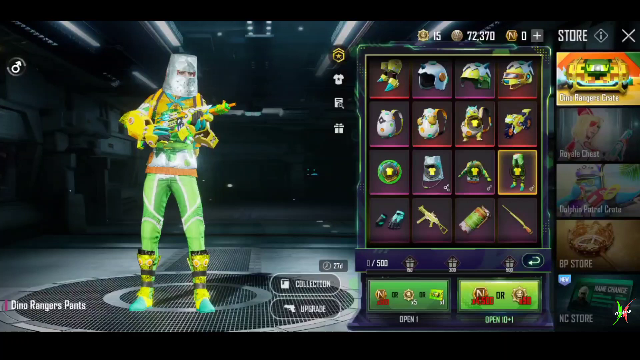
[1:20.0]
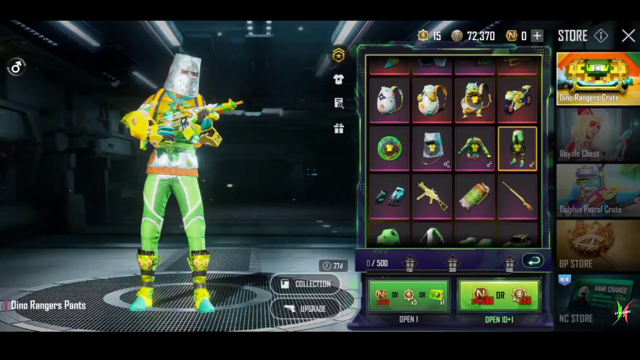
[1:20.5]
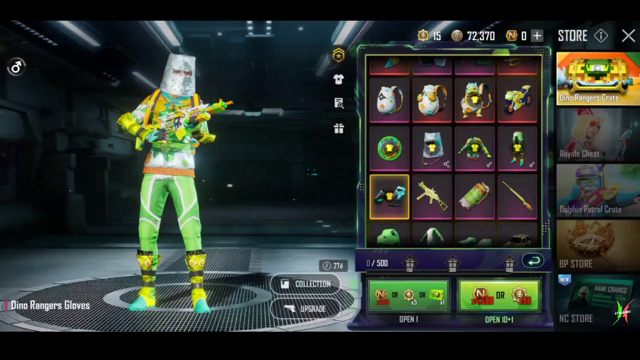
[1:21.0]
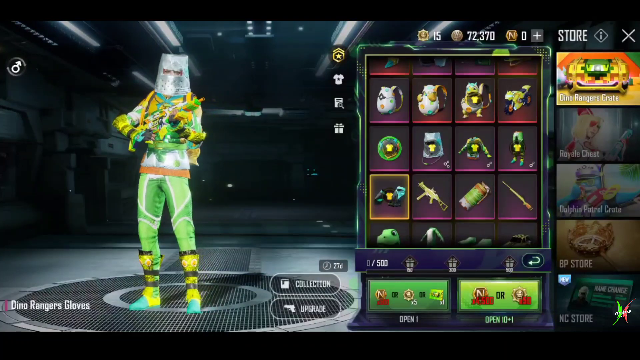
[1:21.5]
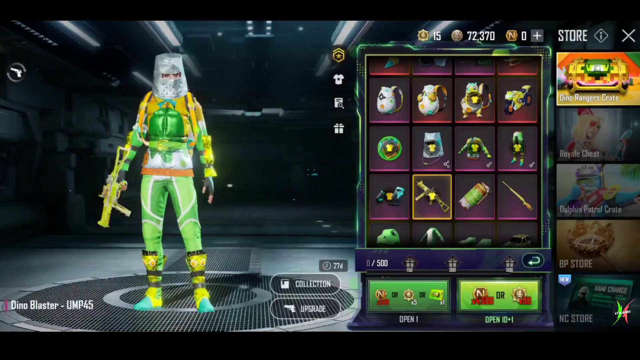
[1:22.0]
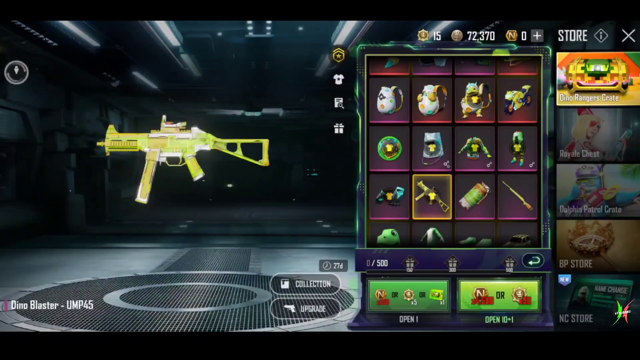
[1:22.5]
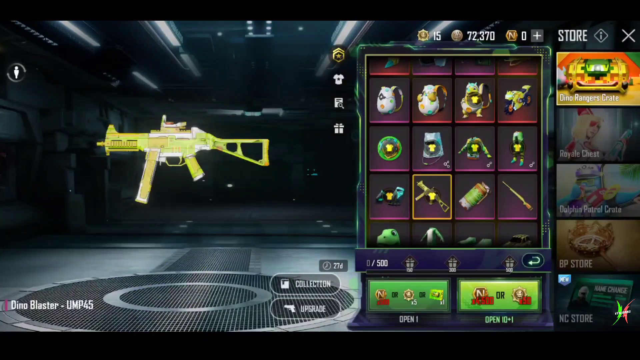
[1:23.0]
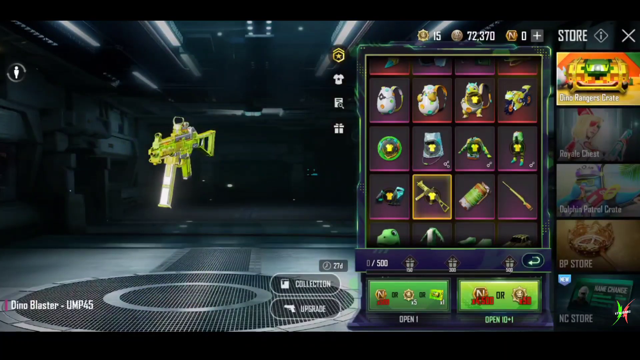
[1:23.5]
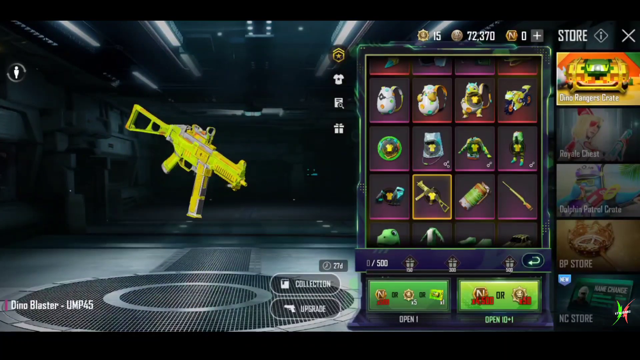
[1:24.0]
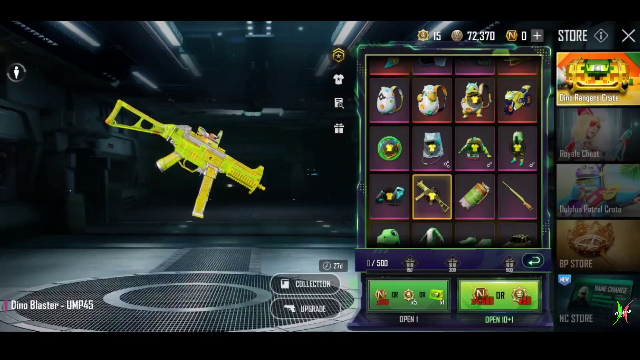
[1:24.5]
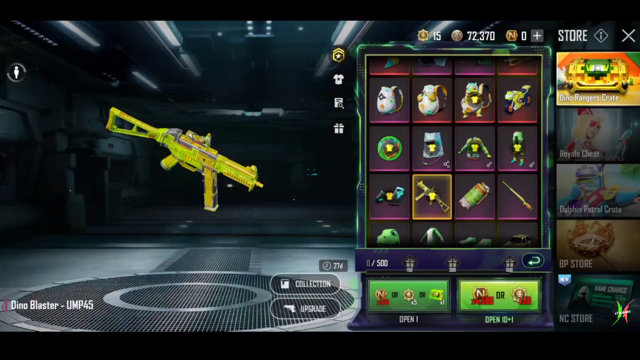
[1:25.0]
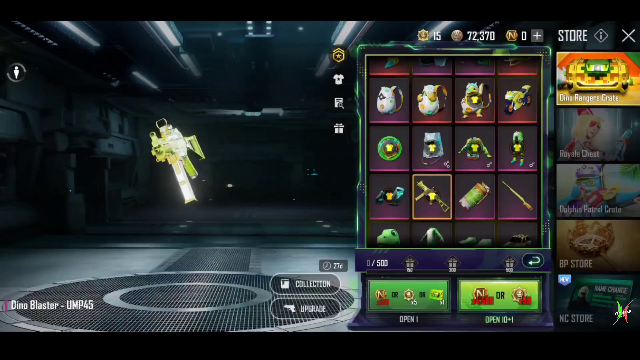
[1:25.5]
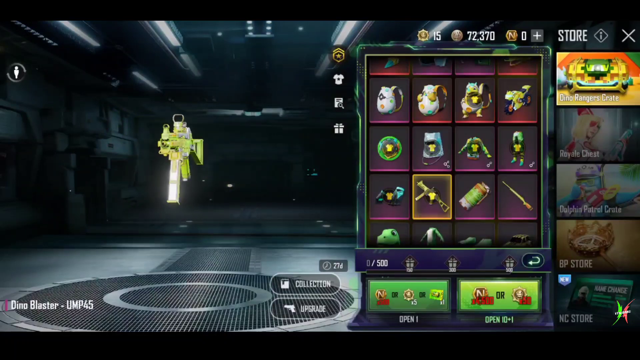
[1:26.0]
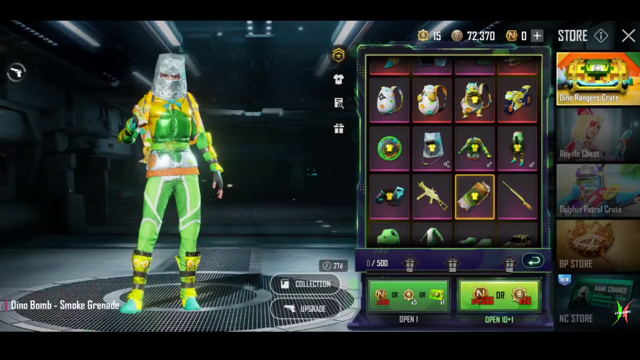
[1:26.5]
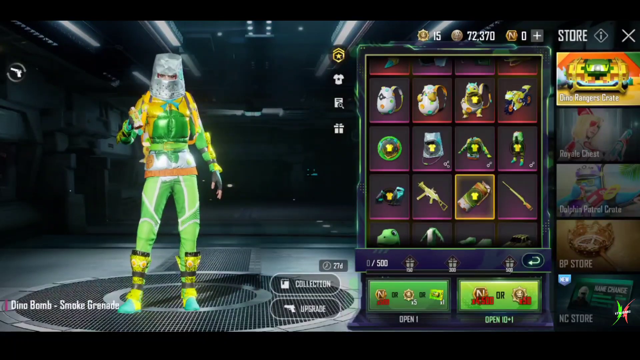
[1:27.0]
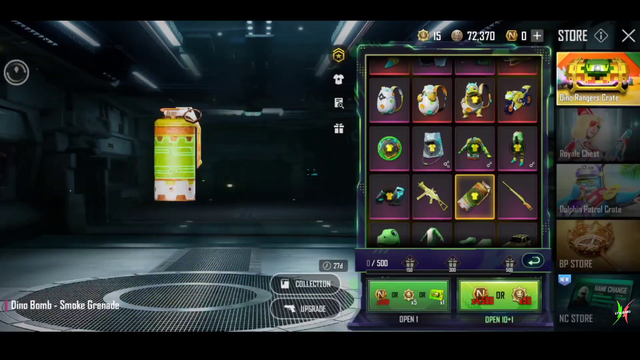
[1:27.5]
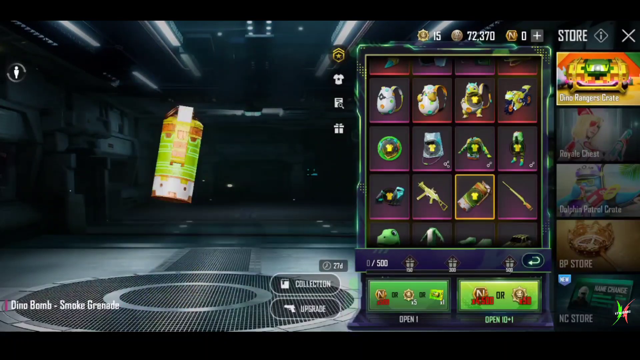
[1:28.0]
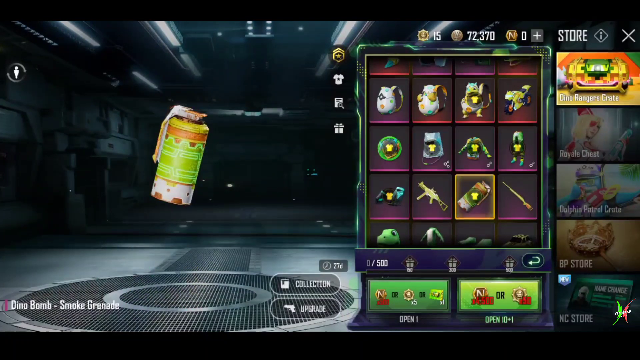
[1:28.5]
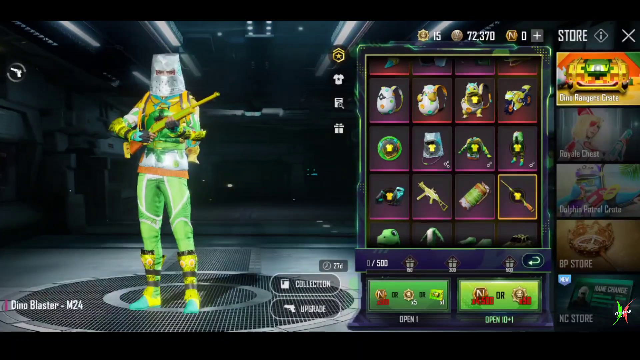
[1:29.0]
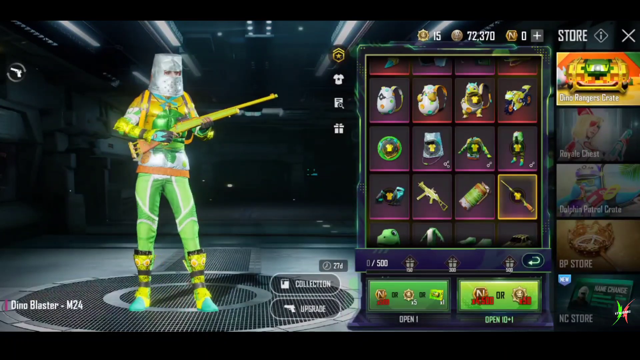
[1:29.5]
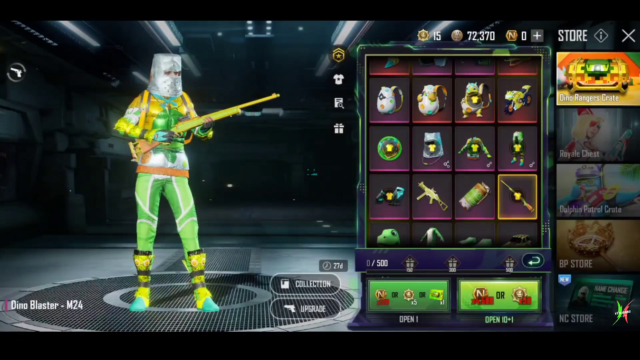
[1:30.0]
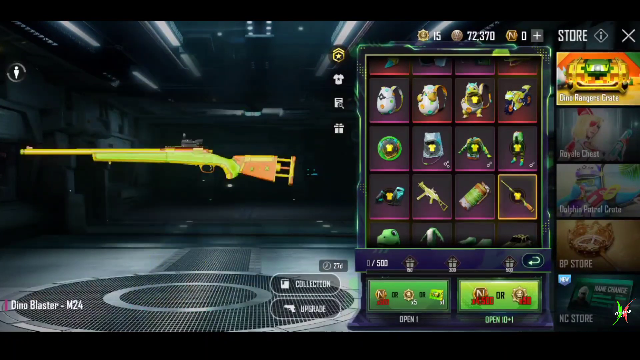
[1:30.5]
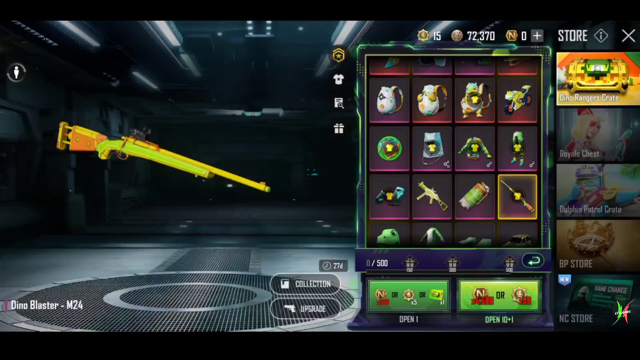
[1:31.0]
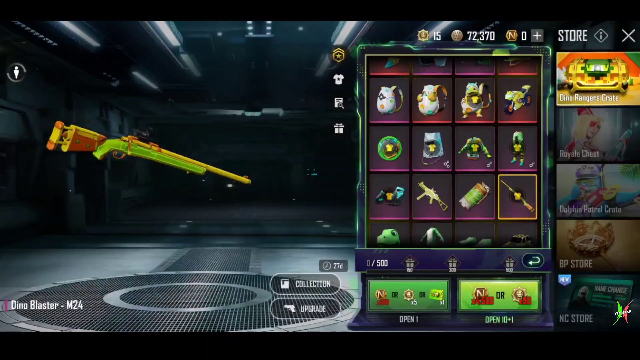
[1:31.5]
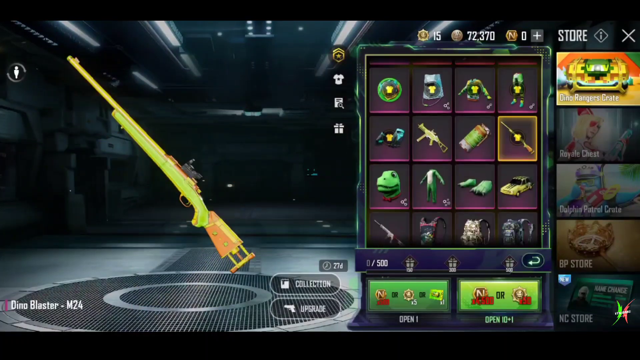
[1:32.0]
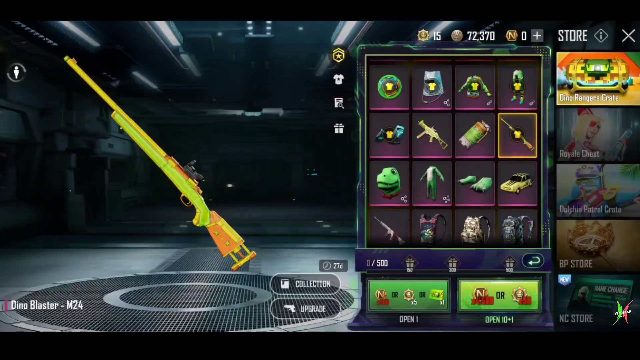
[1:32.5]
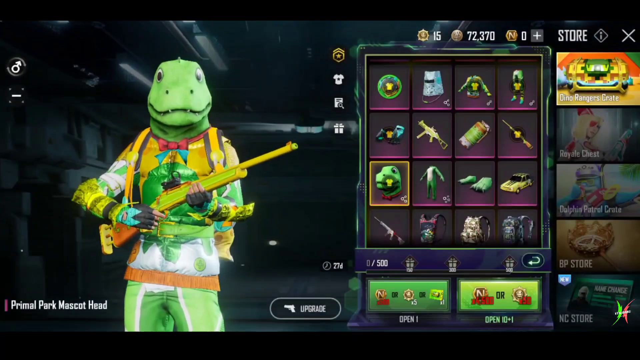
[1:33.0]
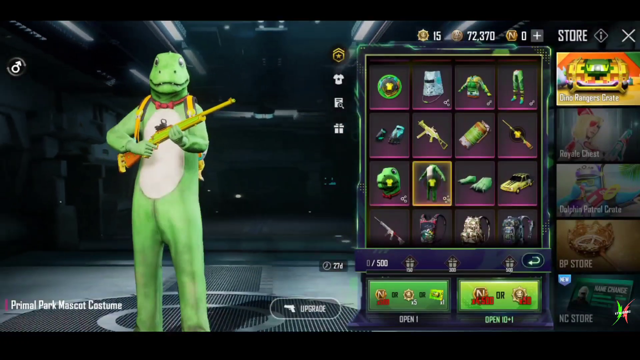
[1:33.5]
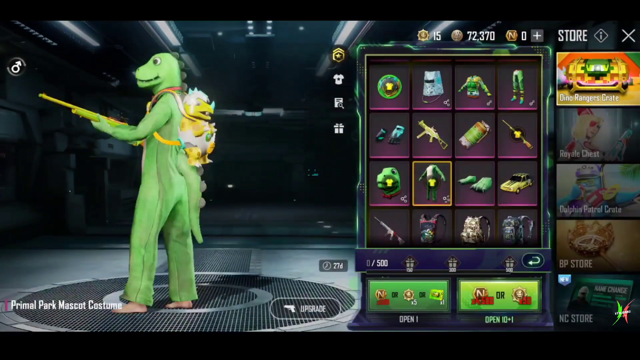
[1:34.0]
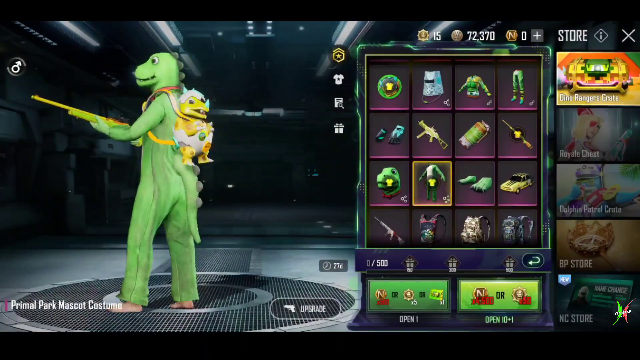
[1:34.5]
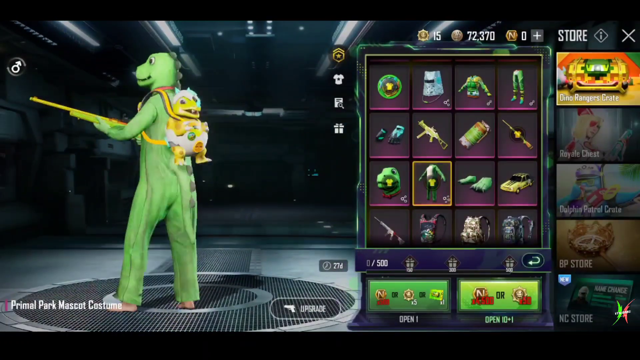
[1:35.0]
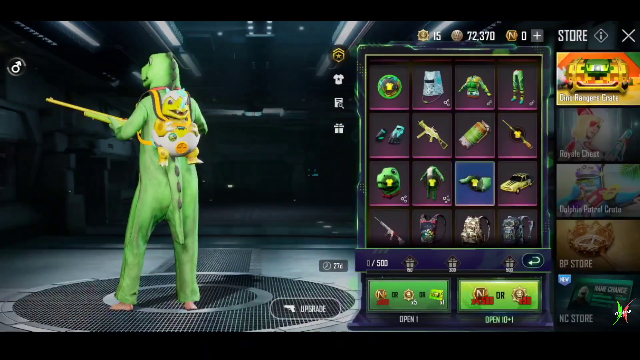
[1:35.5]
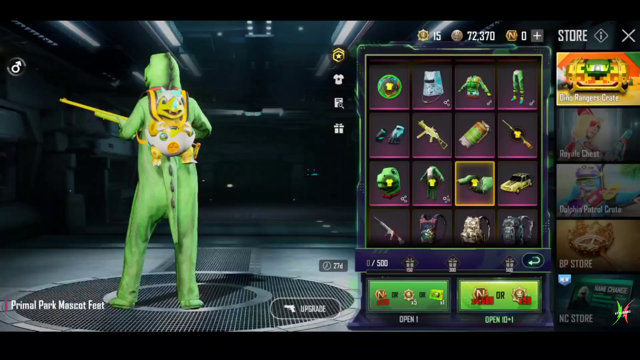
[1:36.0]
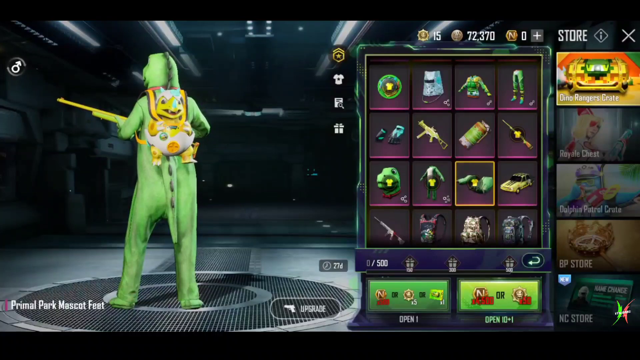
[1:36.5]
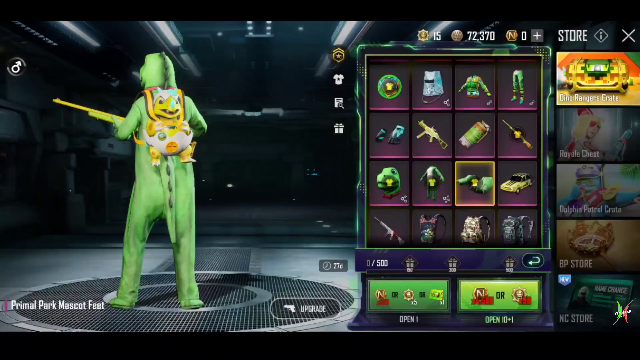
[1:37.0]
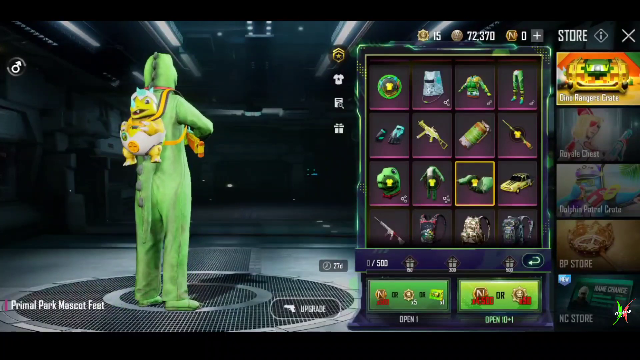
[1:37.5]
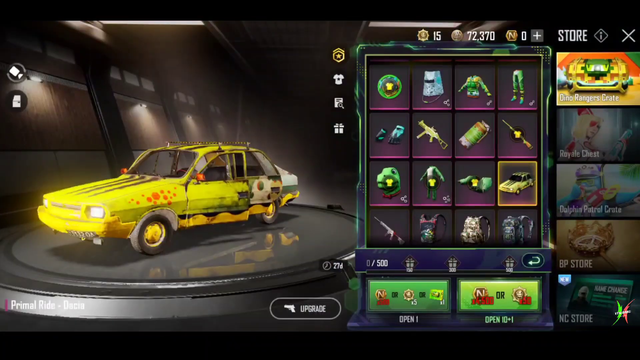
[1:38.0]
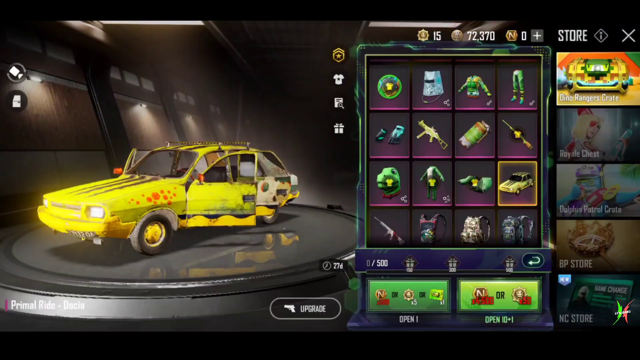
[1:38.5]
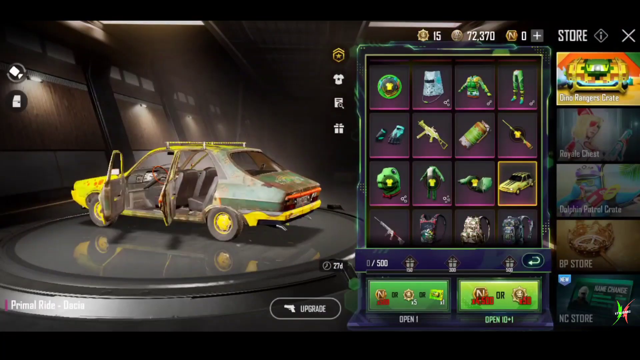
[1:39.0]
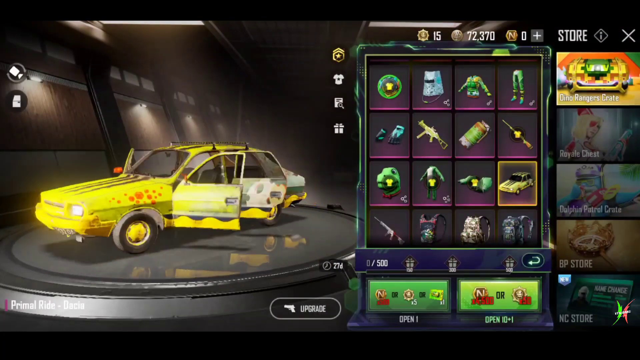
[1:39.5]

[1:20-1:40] What appears to be a player skin is shown with the dinosaur weapon, a bucket helmet, what appears to be green motorcycle pants, and a shirt. At the bottom, the character wears dinosaur-like boots, each with two yellow eyes at the very top. In the bottom right, white text reads "collection" beside a binder, and underneath, white text reads "upgrade" with a gun silhouette. The individual's currencies are shown: what appears to be a sheriff star with 15, "BD" currency at 72,370, and a hexagon shape with zero.